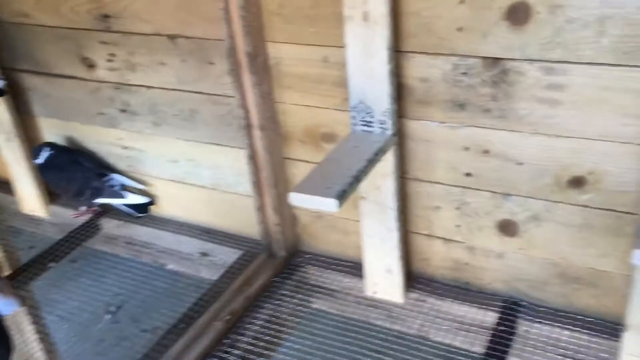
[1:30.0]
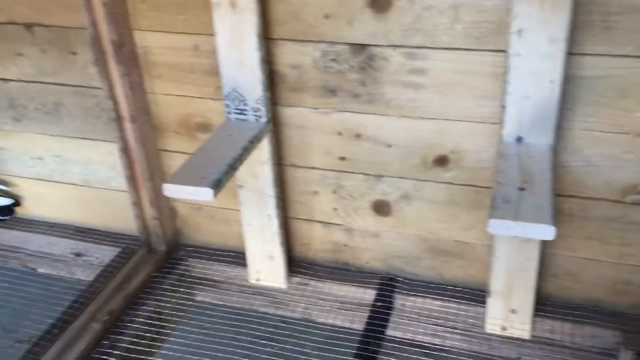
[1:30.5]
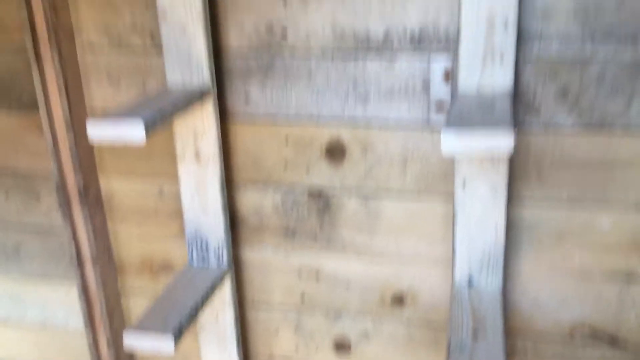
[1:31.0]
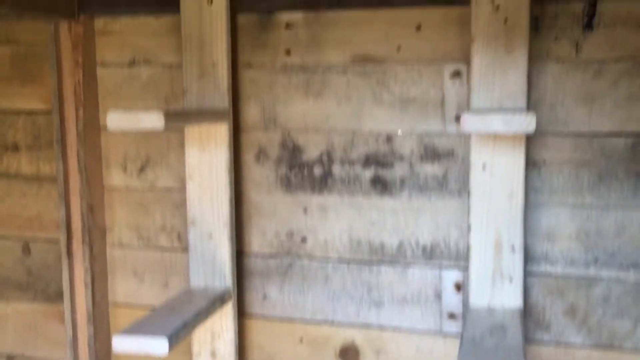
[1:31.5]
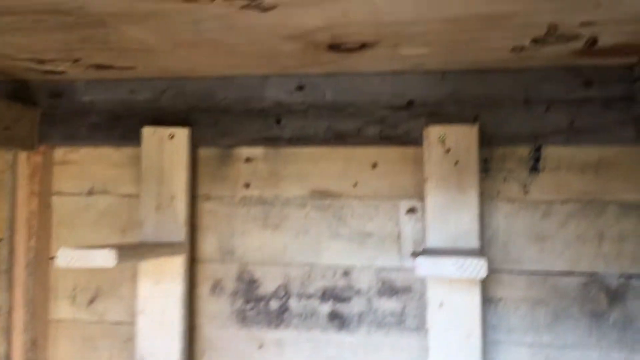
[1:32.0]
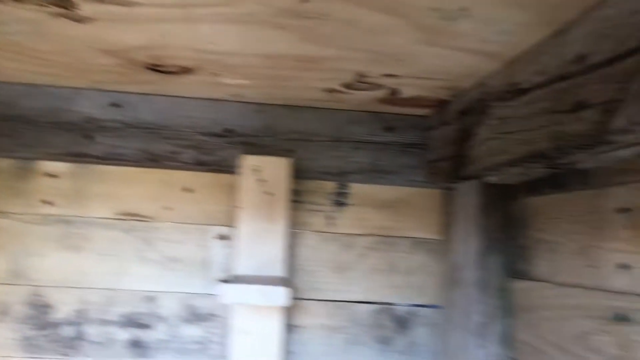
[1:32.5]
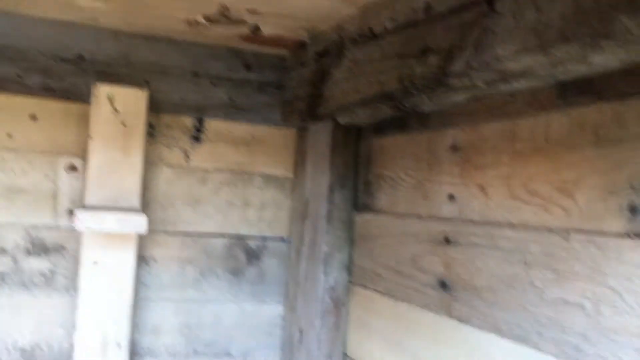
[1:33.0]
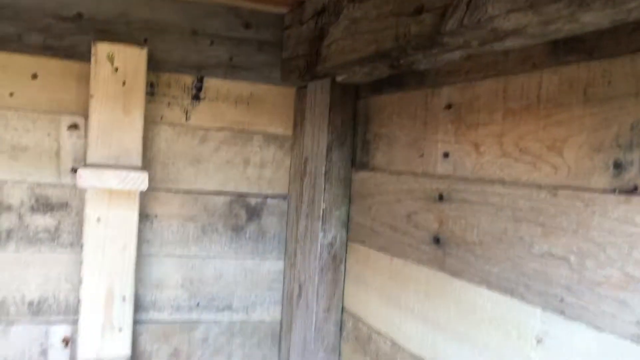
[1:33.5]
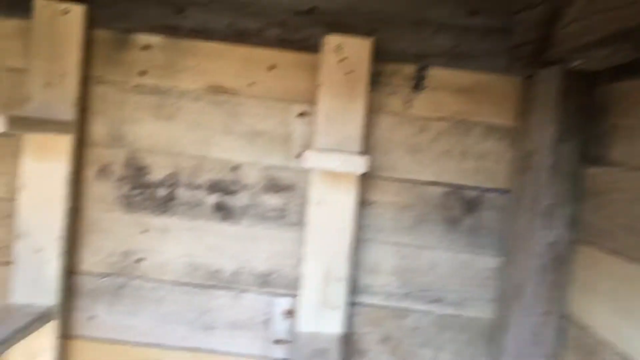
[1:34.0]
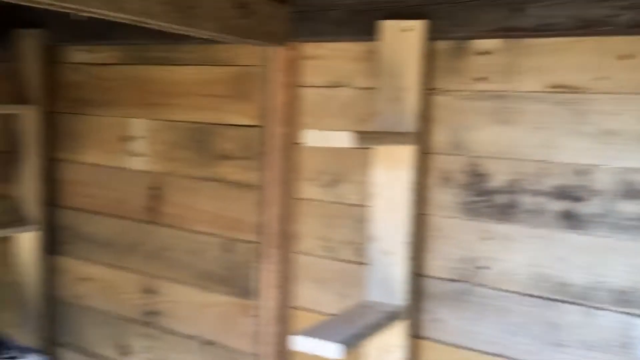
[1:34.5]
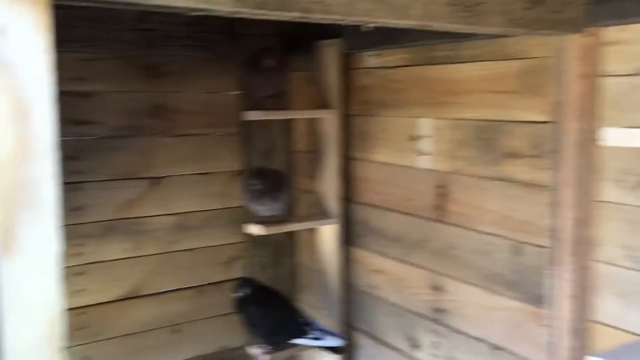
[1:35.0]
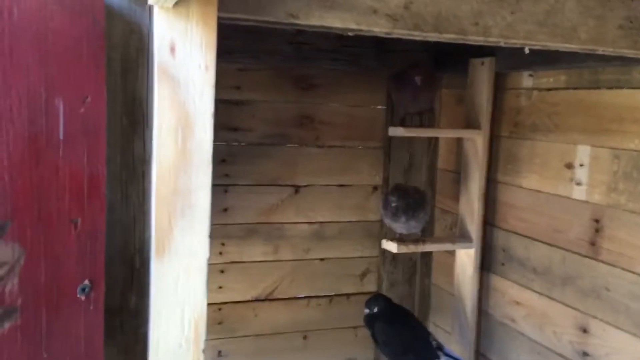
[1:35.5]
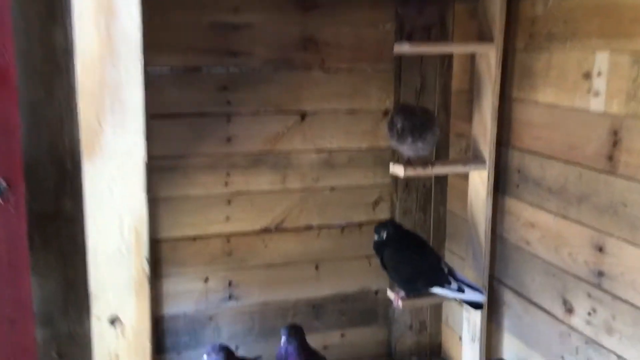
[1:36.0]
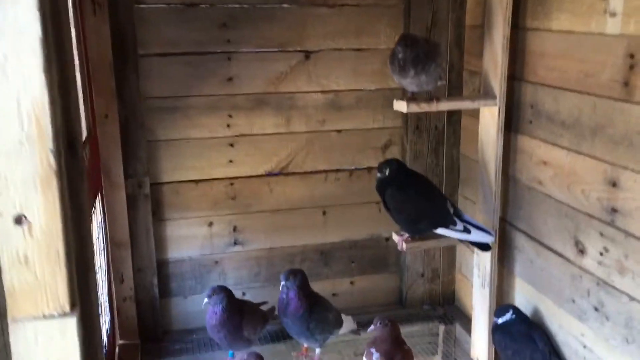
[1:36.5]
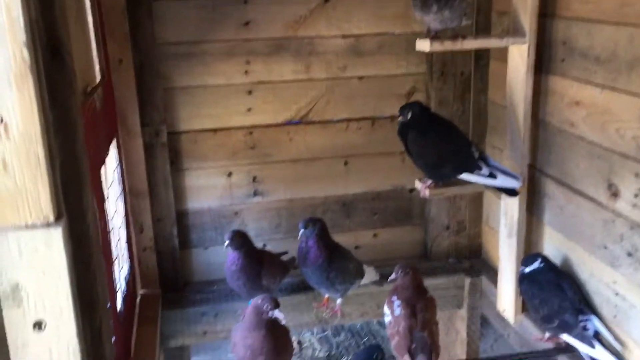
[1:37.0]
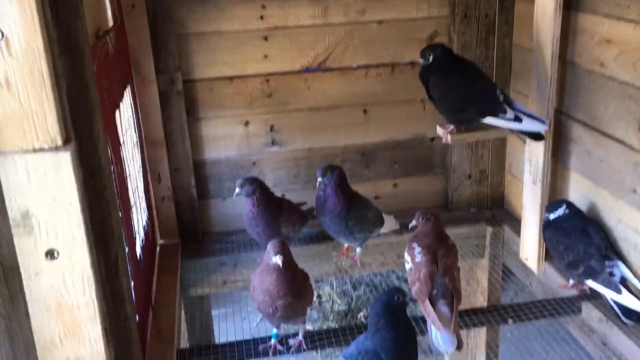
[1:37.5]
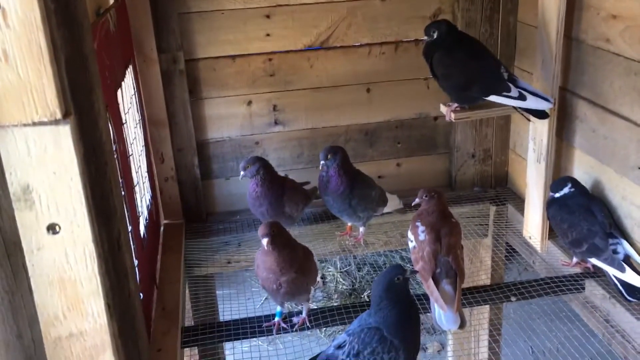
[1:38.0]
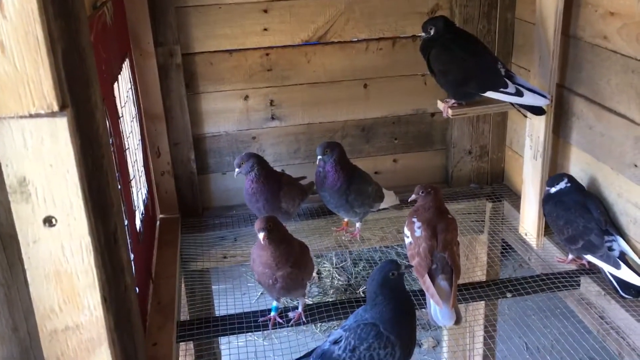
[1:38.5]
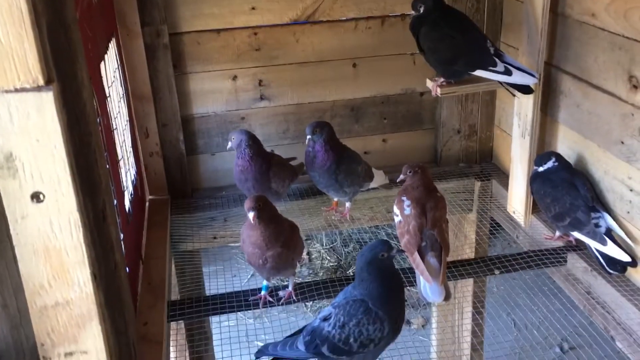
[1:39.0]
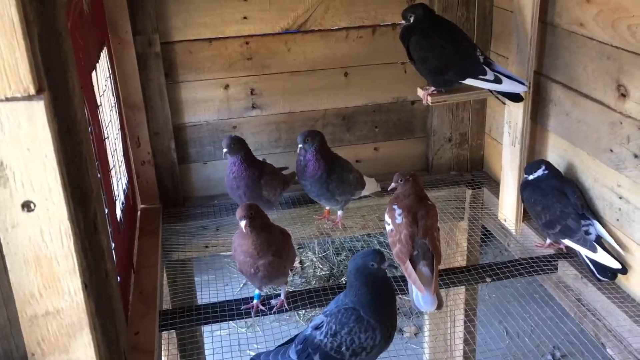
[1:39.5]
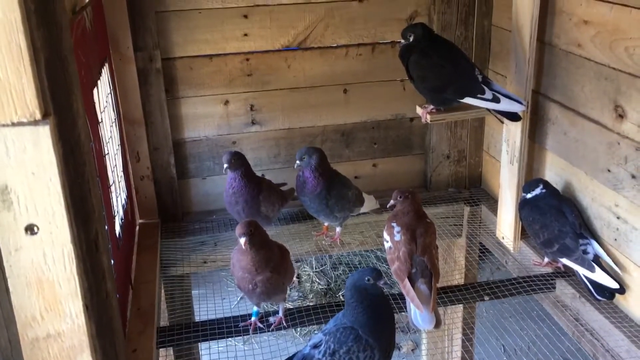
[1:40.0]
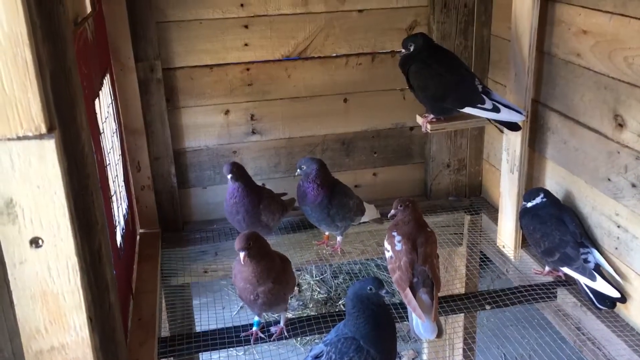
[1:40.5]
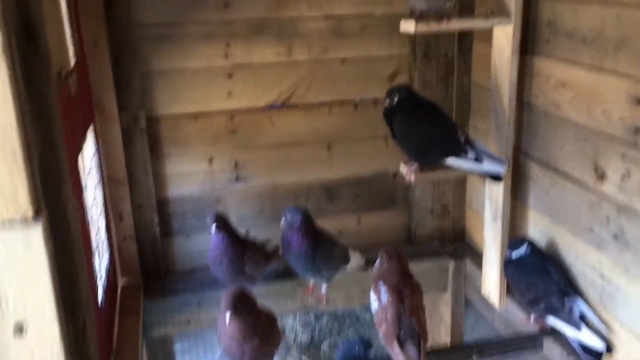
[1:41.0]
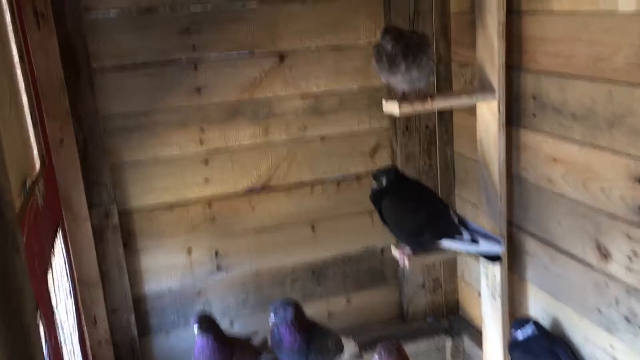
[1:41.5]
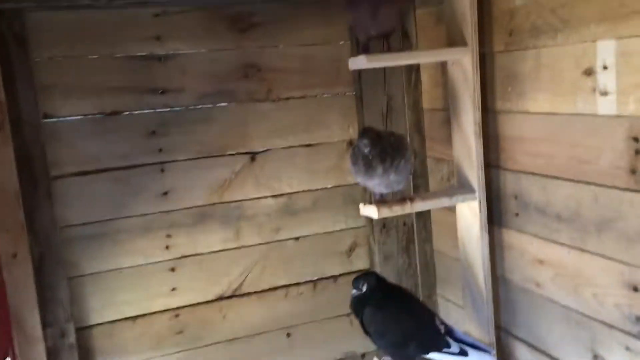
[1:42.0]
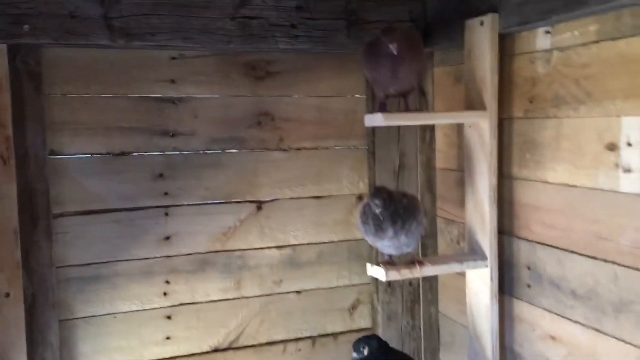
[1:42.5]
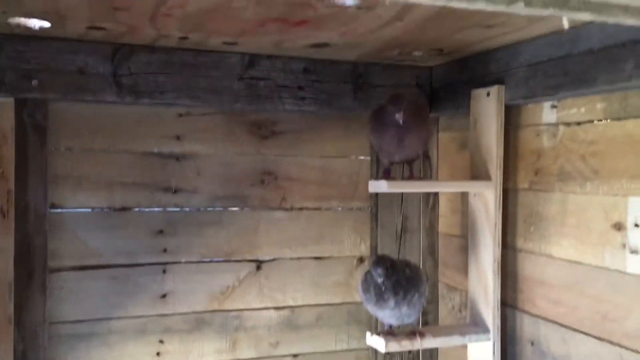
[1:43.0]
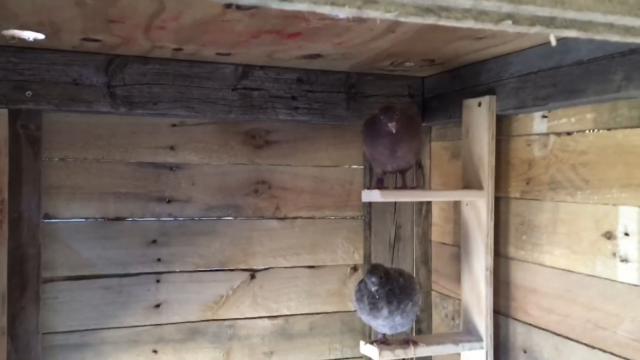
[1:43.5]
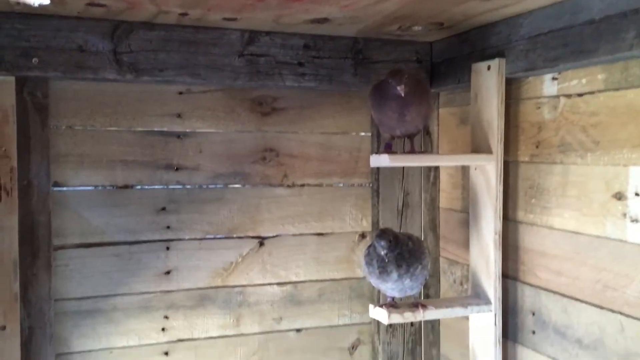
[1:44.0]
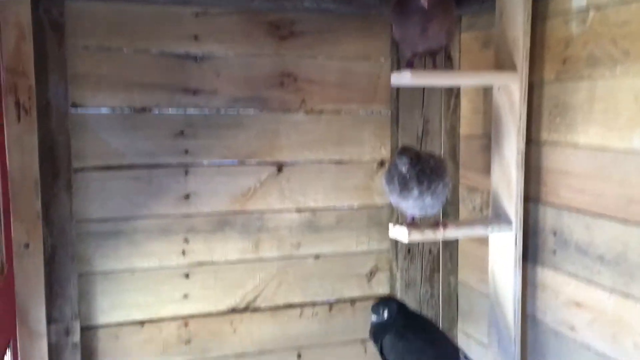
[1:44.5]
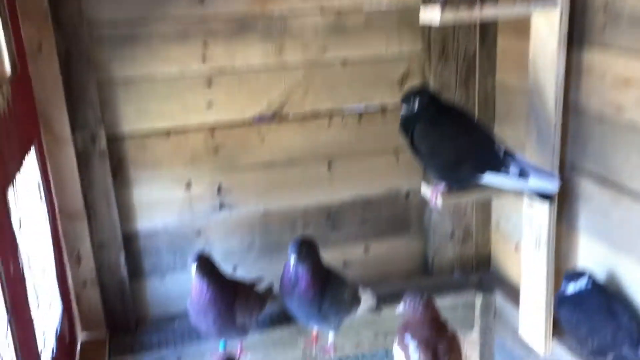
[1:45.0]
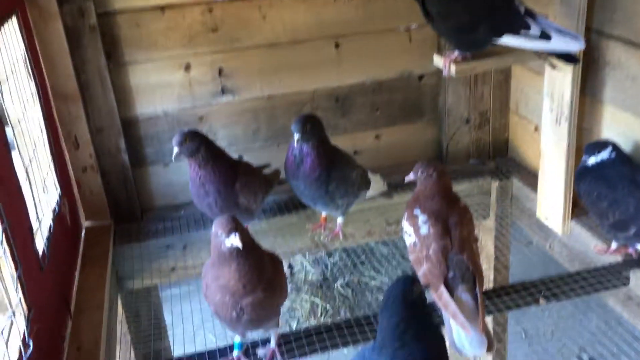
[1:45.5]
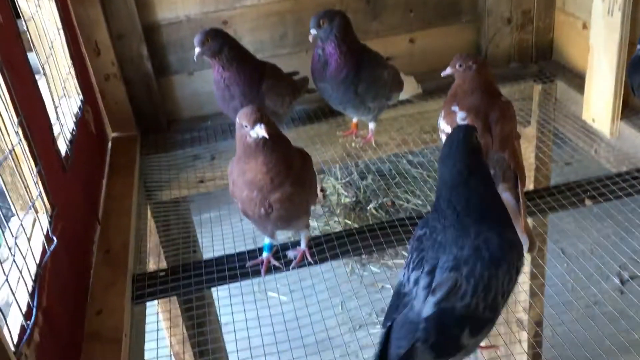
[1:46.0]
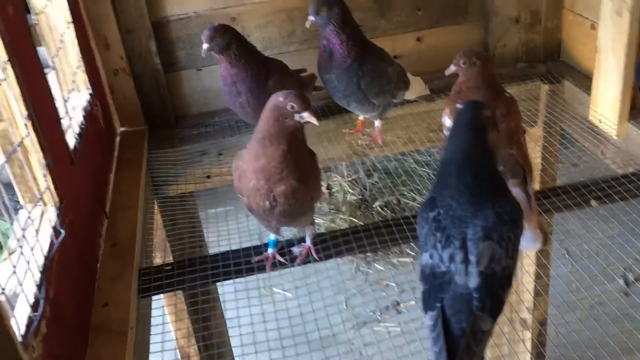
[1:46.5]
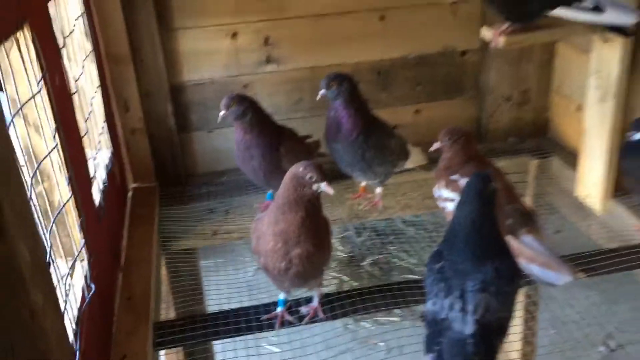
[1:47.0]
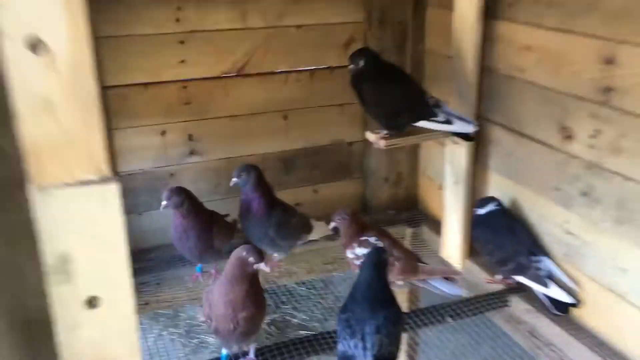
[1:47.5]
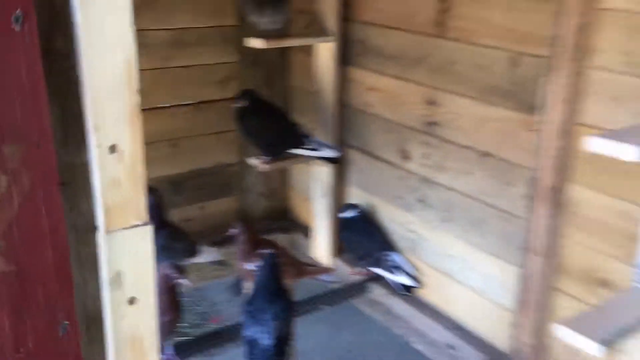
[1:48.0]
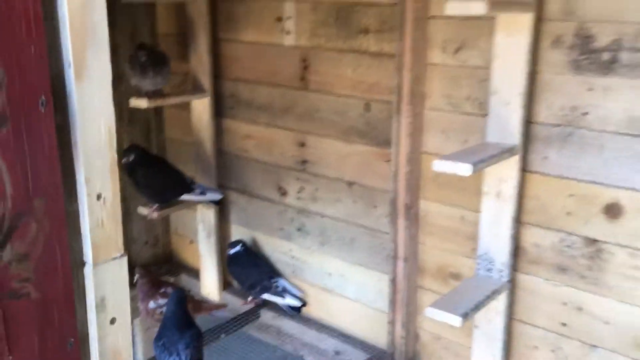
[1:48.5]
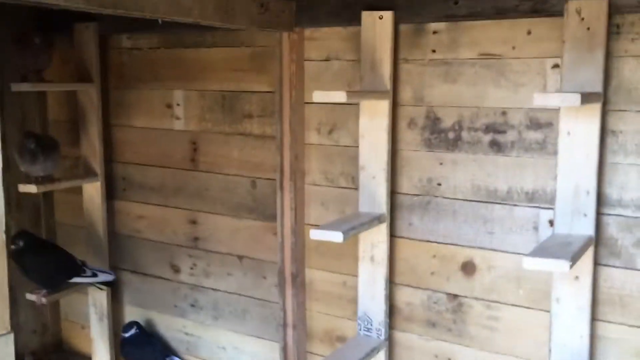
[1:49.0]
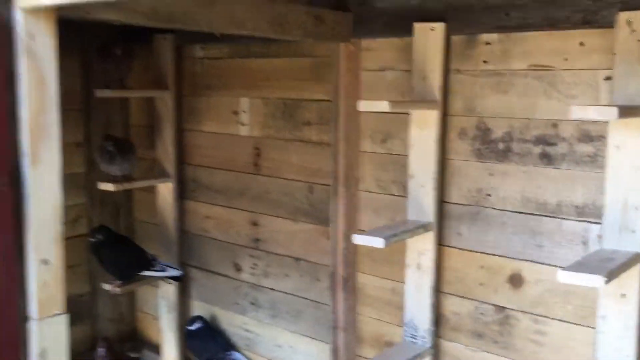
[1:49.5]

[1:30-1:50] The whole inside of the pigeon coop is shown, with many roosting poles. Three pigeons are on the roosting poles, and there are eight pigeons in total, apparently four brown and four black and white. The bottom of the coop is made of chicken wire, and the pigeons look happy in their coop.